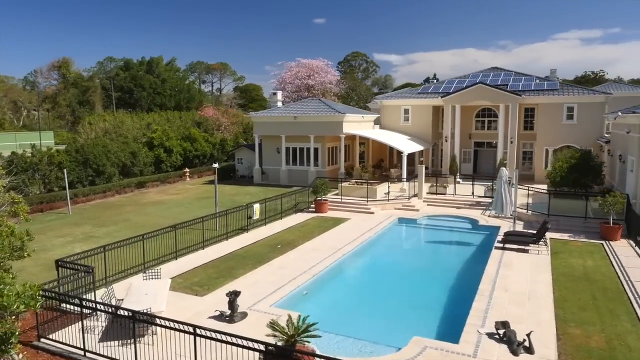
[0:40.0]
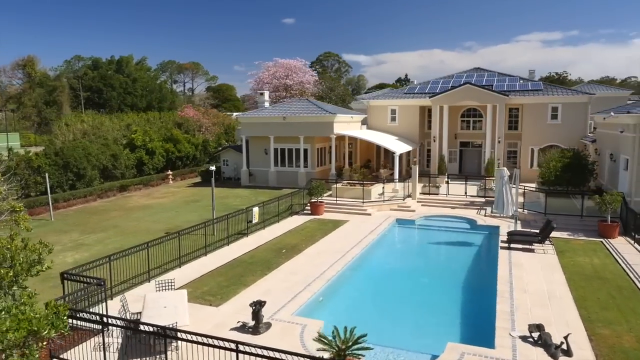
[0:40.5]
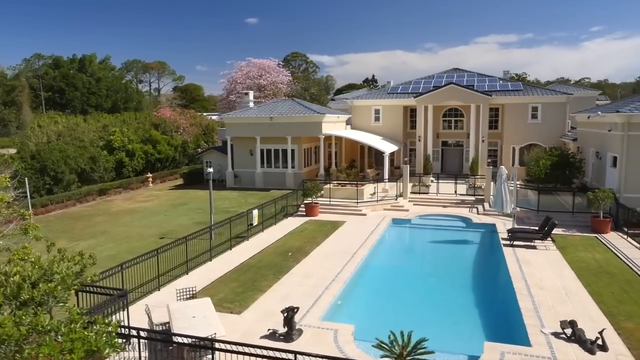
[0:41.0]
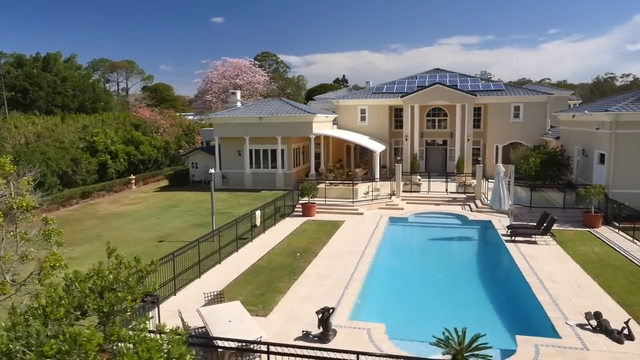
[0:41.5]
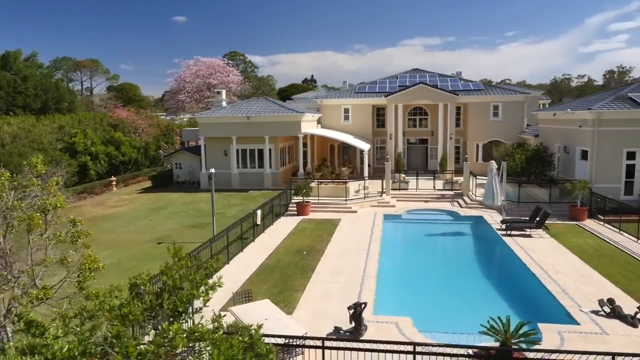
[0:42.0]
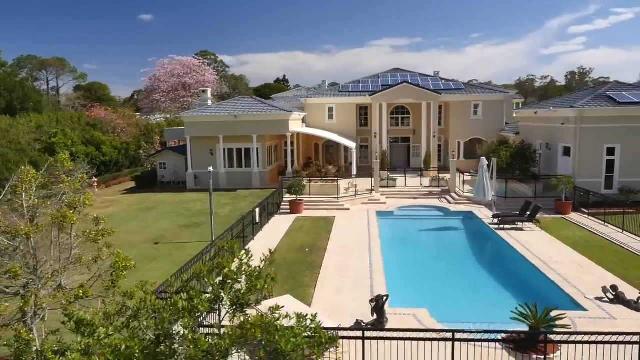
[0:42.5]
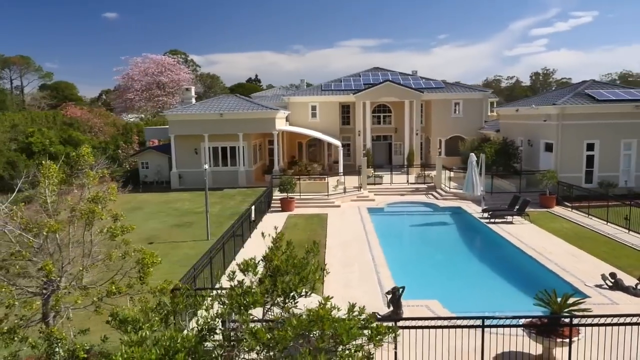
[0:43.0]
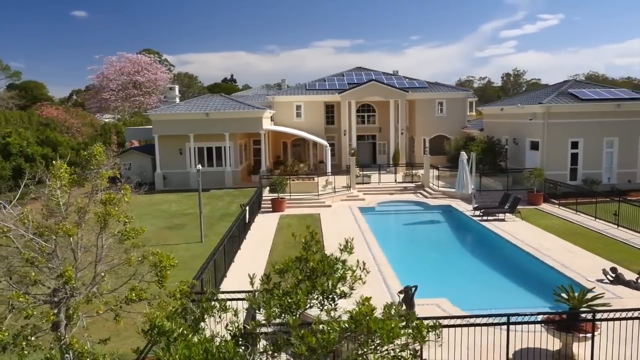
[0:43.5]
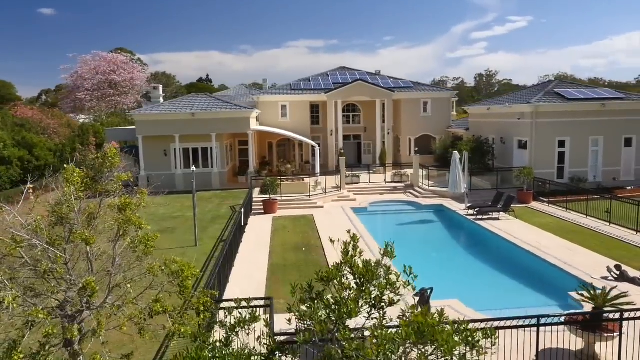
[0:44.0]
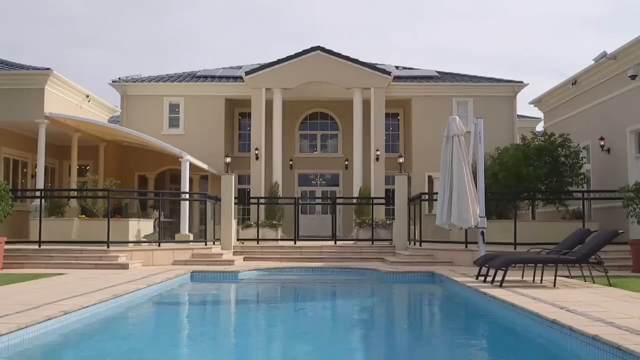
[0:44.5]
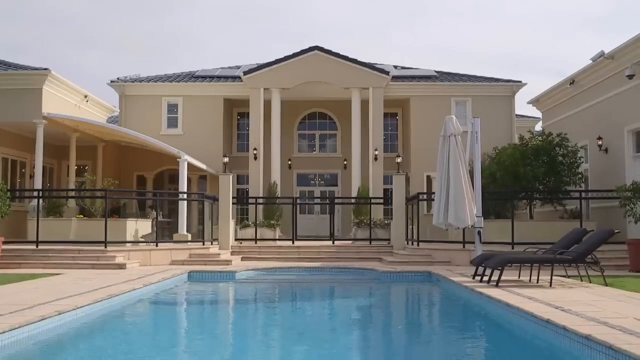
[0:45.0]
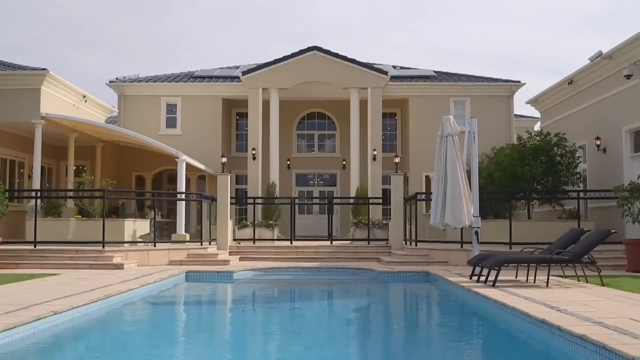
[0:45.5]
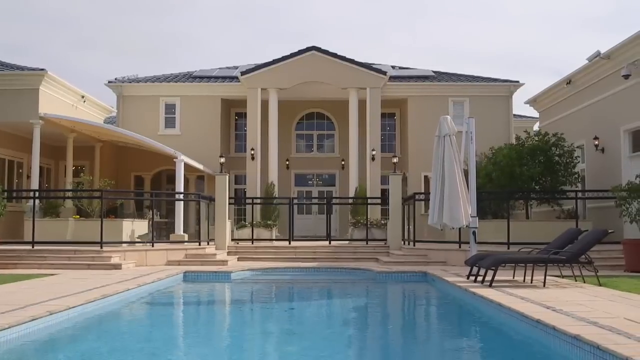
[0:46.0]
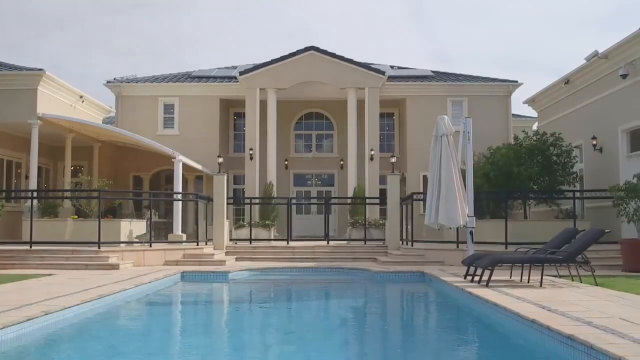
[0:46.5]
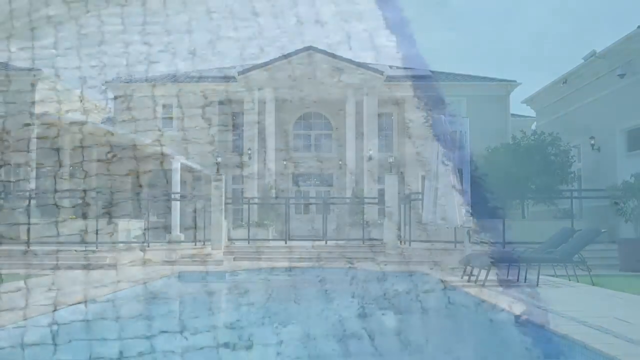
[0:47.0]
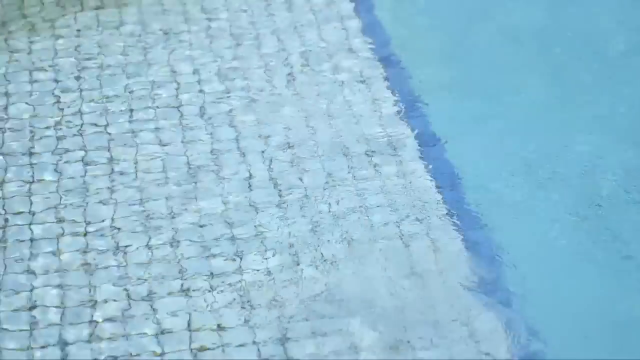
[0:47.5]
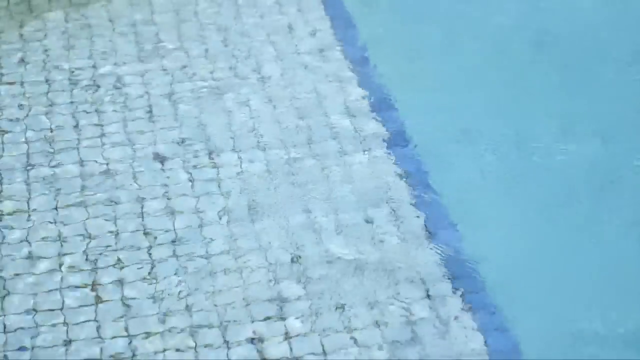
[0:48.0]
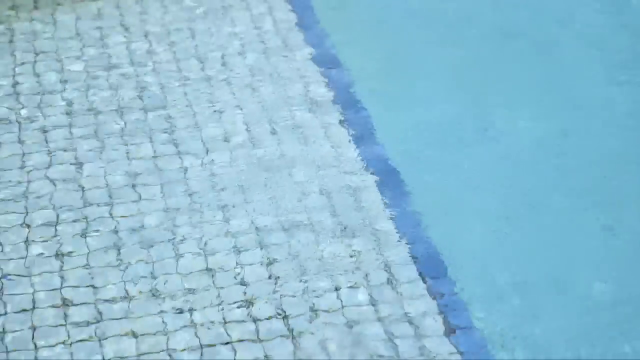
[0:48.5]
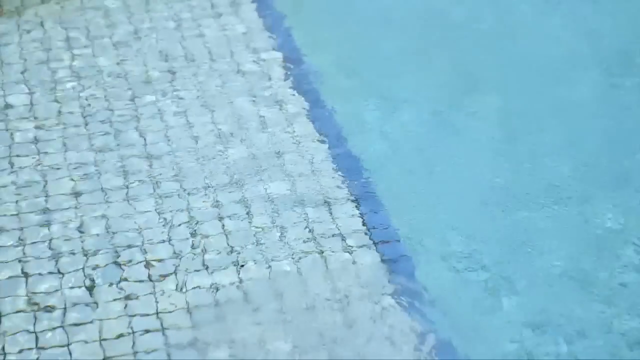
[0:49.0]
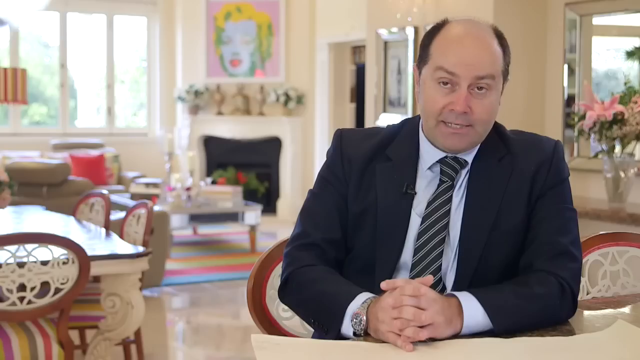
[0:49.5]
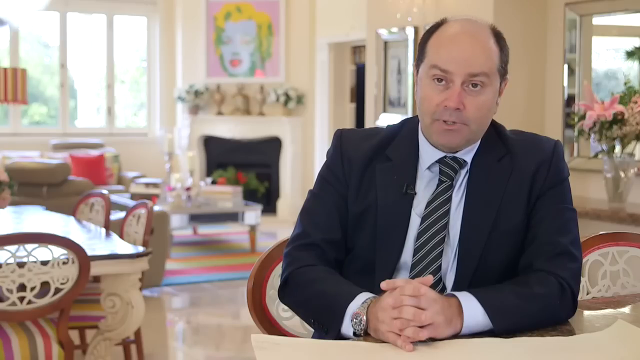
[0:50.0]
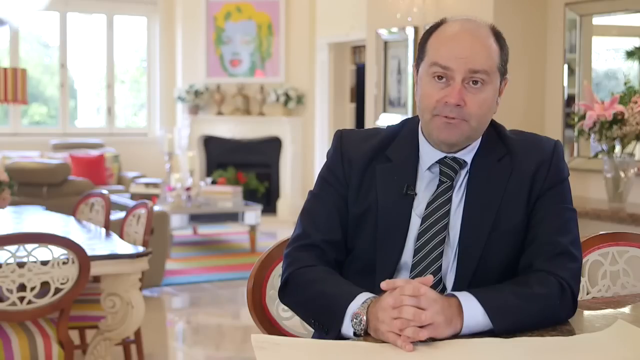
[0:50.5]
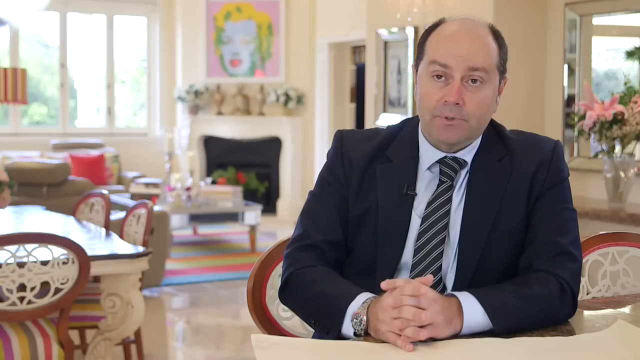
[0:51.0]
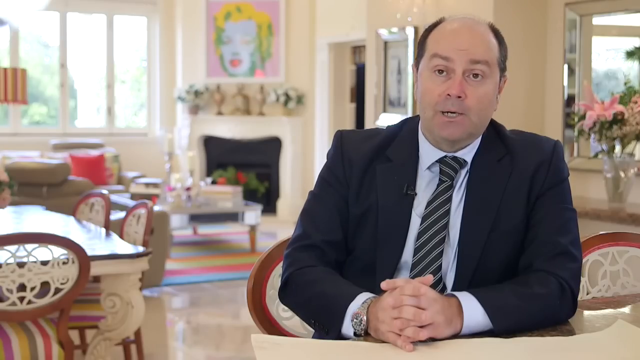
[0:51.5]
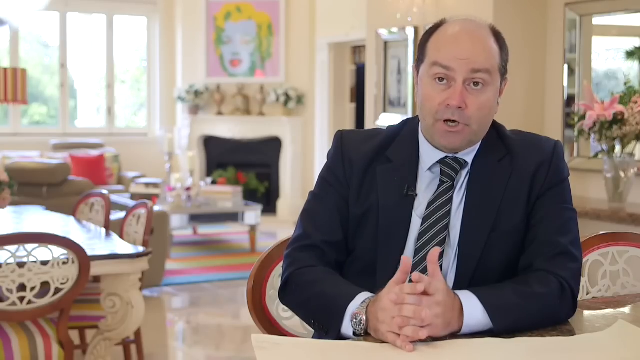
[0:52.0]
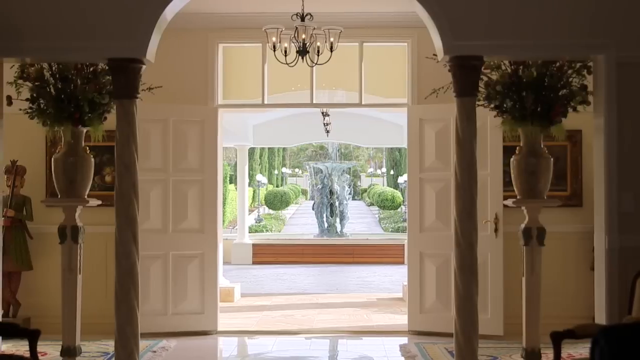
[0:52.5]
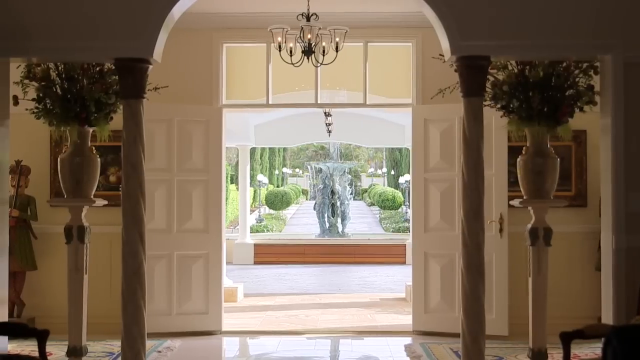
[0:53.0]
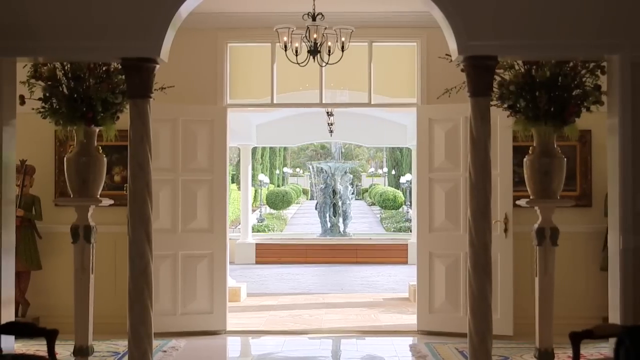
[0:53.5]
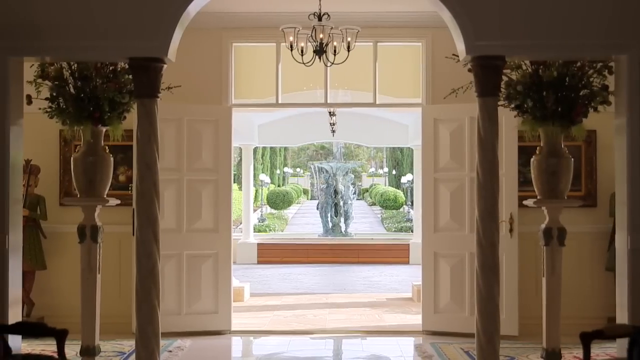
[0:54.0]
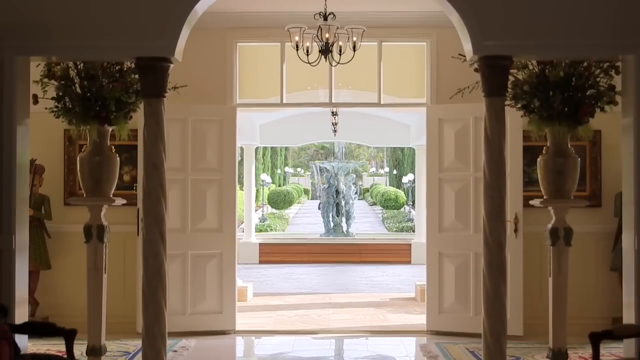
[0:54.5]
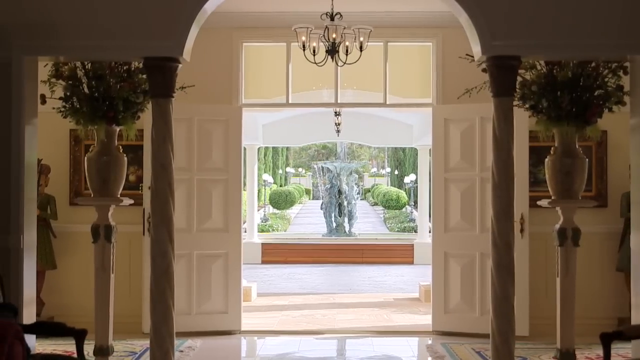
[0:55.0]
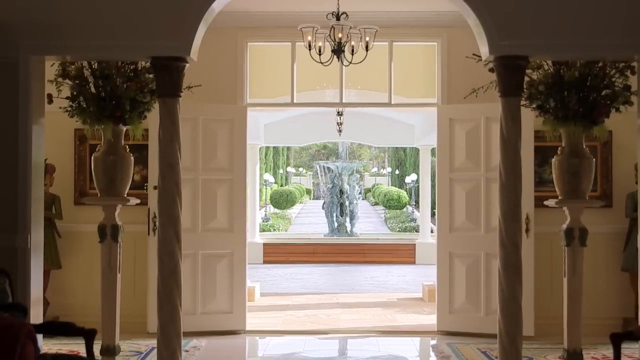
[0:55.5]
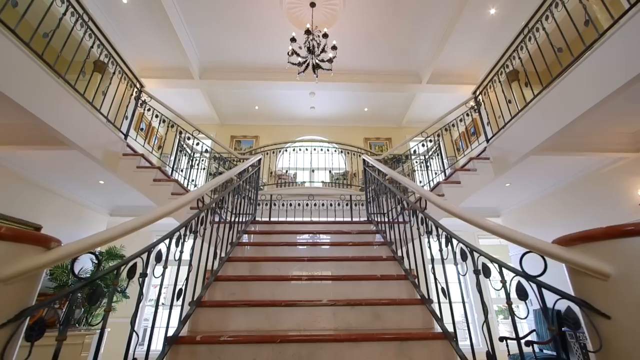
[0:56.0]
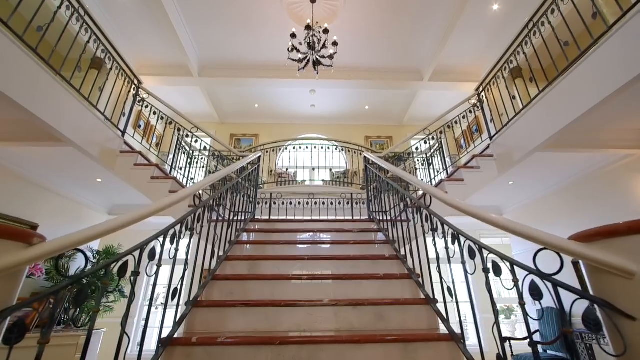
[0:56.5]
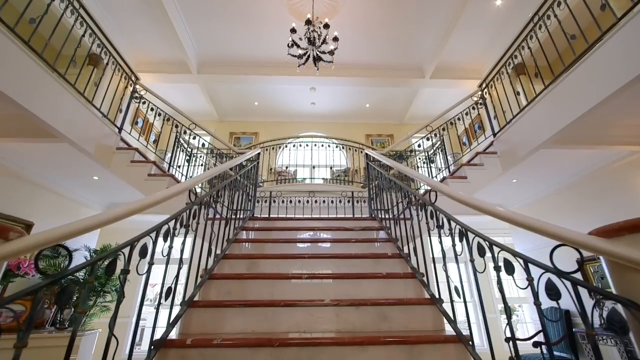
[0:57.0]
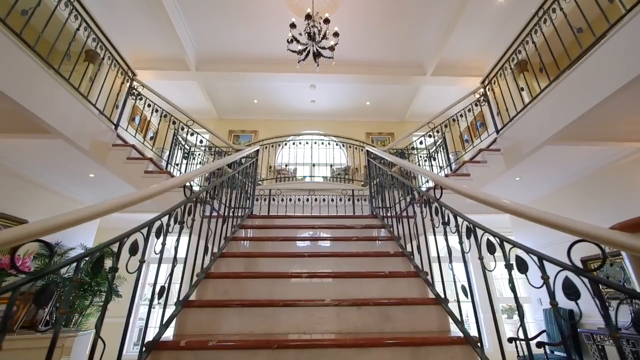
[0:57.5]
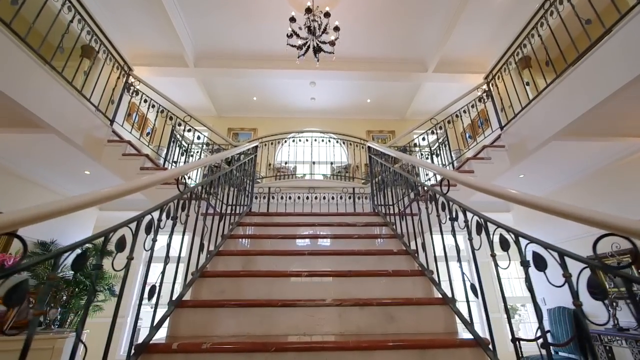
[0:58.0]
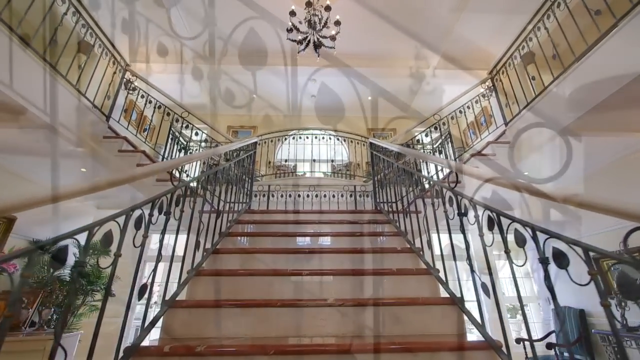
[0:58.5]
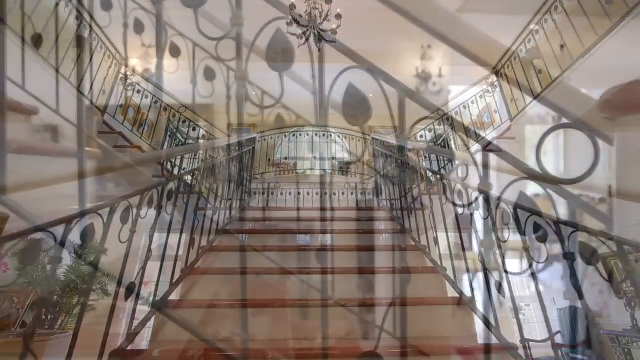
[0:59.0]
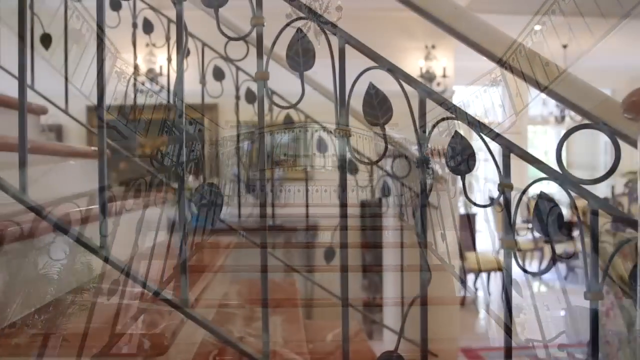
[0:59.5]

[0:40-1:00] A different house is shown. It has two floors, is almost beige or green-white in colour, and has solar panels on its roof. In front of the house is a swimming pool, and next to the pool are pavement and small patches of green grass or lawn. A barrier seems to separate two parts of the yard: one with the swimming pool and the other just a clean floor. The camera views the house from an elevated angle and goes round from right to left, showing the house from different angles, then gives a closer view of the house and transitions to the water inside the swimming pool. Next, a bald old man wearing a black suit, a blue shirt and a black striped tie sits inside a house that almost resembles the one being shown. The stairs are then viewed from a lower angle as the camera goes up.